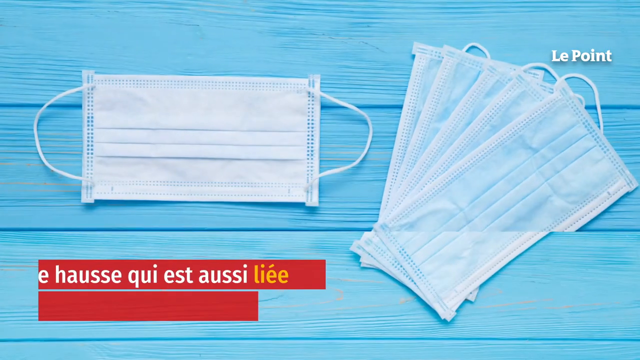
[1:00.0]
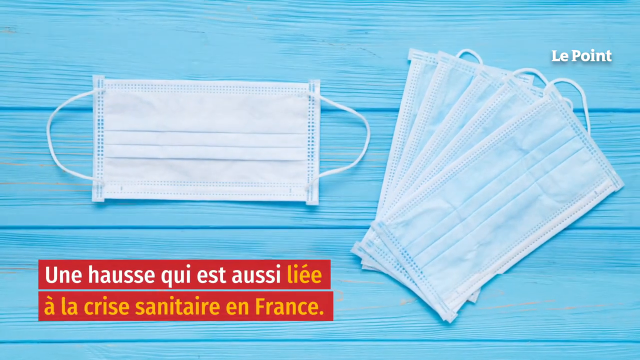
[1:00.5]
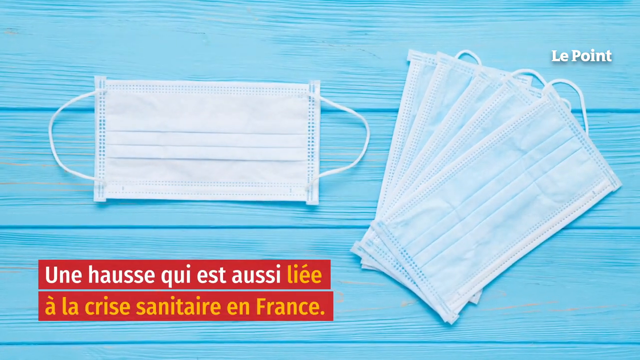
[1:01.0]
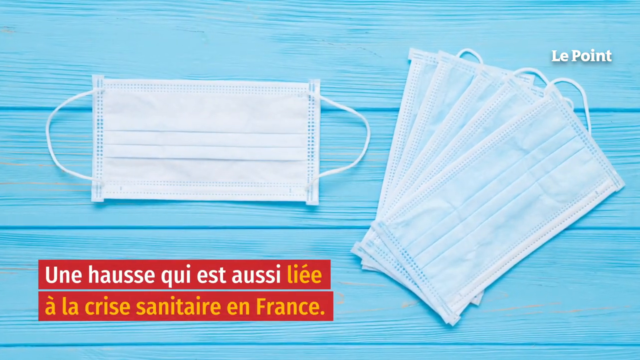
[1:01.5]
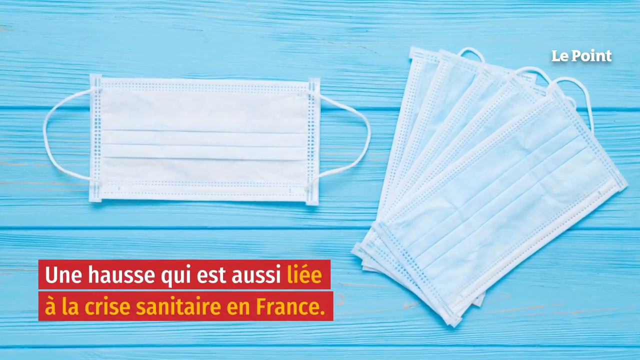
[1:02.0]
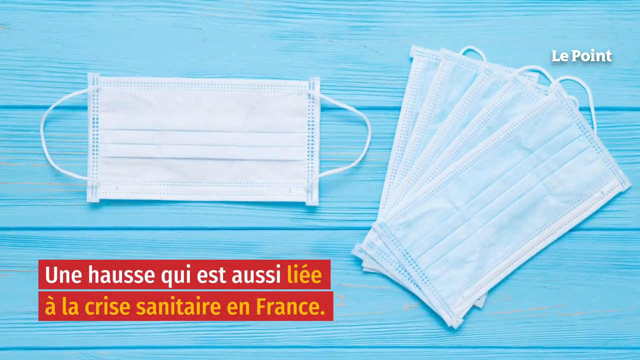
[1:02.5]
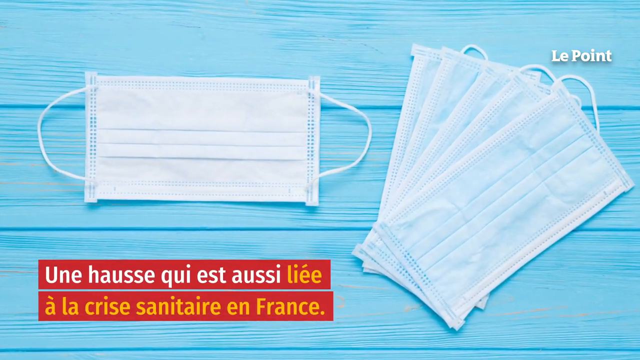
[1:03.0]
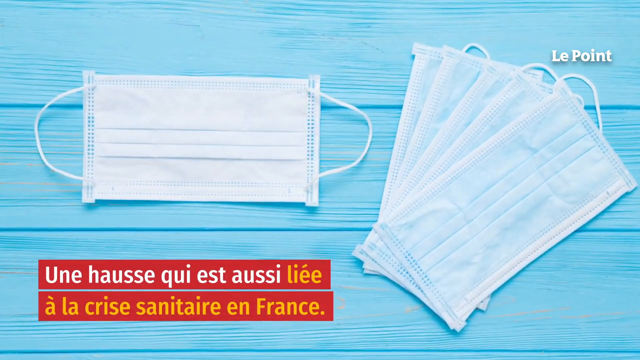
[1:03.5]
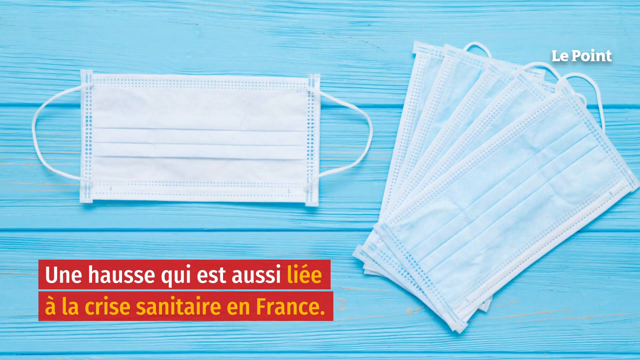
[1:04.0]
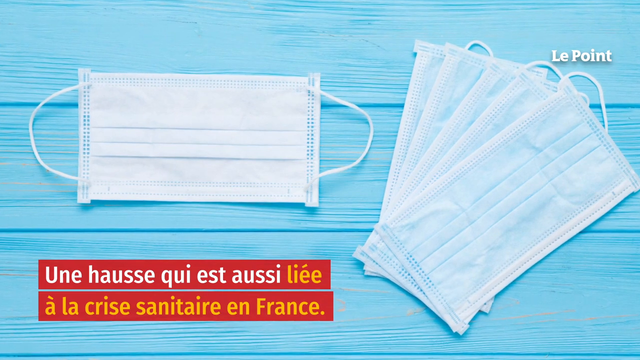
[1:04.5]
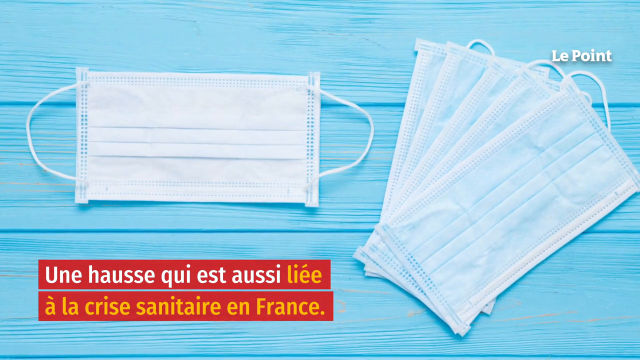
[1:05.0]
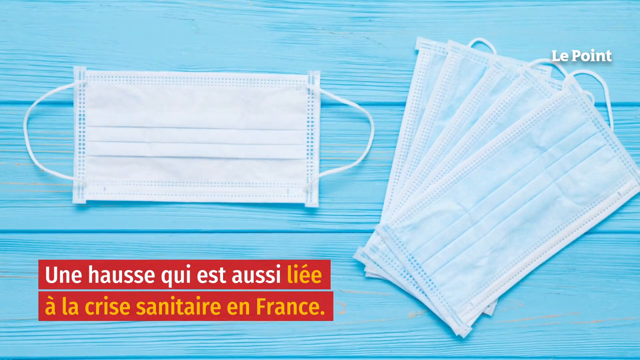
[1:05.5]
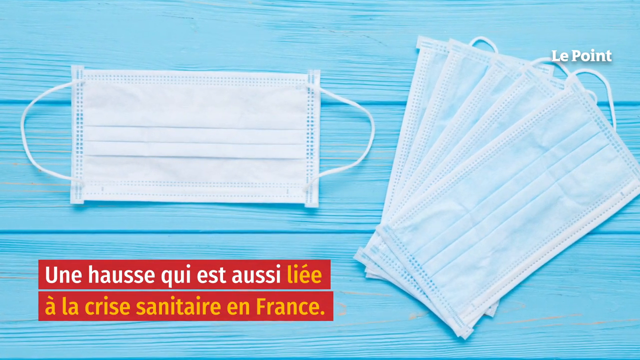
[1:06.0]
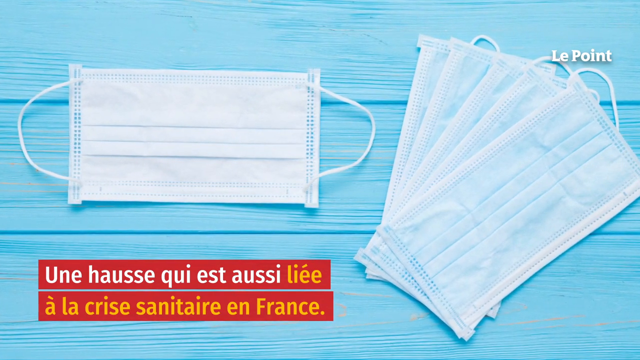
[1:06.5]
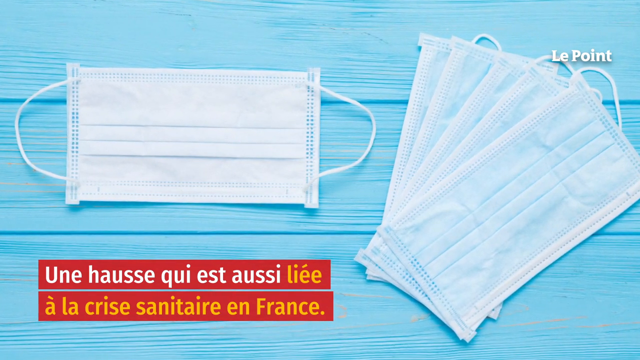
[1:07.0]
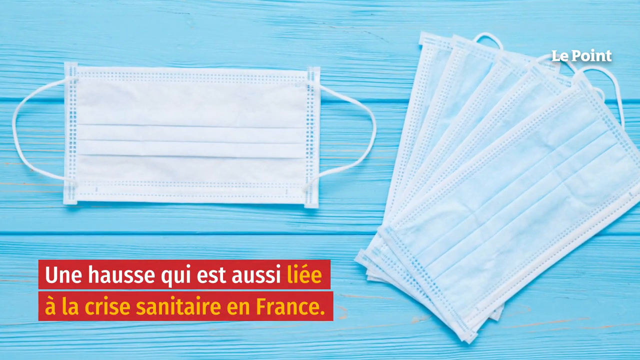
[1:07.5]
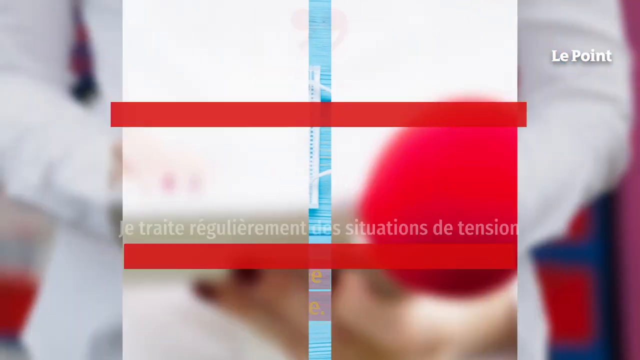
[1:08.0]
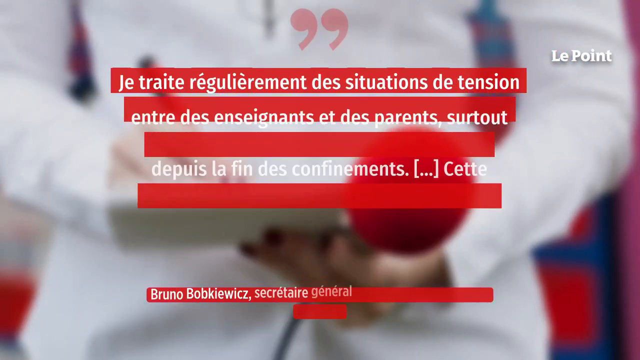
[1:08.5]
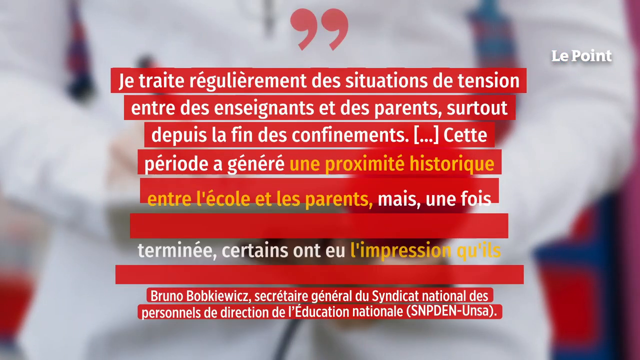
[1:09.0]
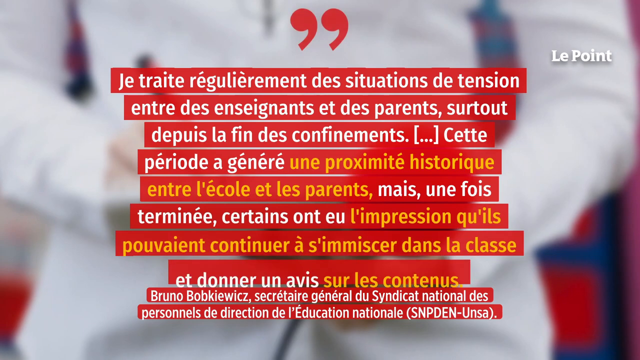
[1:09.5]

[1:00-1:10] Something that looks like maybe a wooden picnic table, or three pieces of wood, is painted a very light blue, with the grain and indentations in the wood visible. Cheap paper masks are carefully laid out on it: one is very centered, and four more look like they were carefully placed on top of each other. At the bottom the red banner appears again, with a sentence in white and then a sentence in orange; France is mentioned, and the text appears to be in French. Another image then appears, looking to be maybe a doctor's coat or simply a white coat, very blurry, showing only the person's chest and arms and not their legs. A long quote seems to be put up on screen, taking ten banners; it starts at the top of the screen and toward the bottom looks condensed to a smaller size. The font is still orange and white, mostly white except for the middle part in orange.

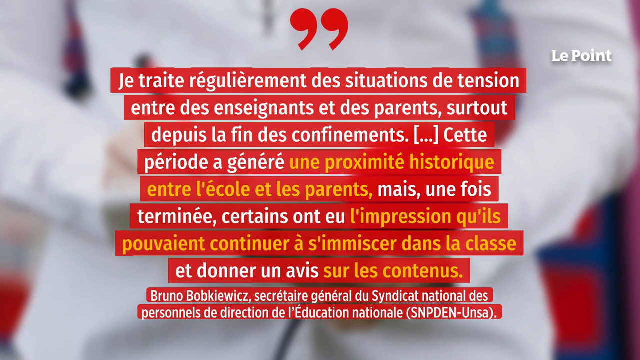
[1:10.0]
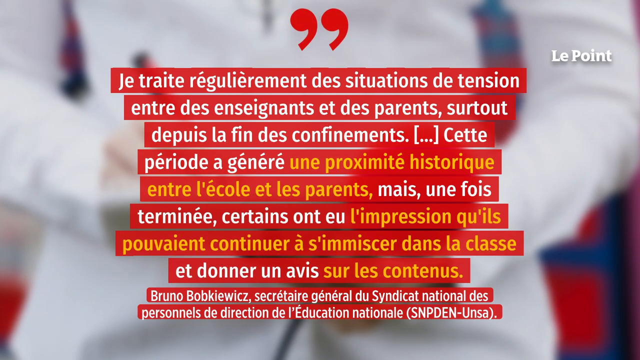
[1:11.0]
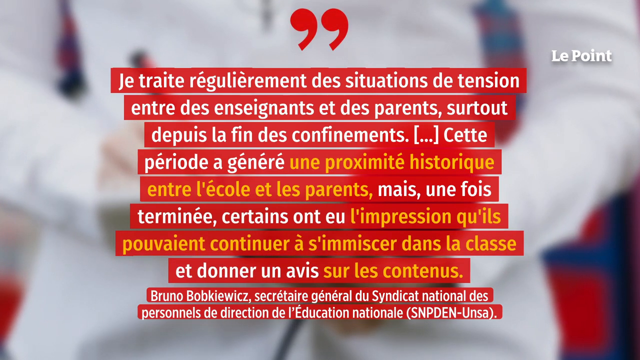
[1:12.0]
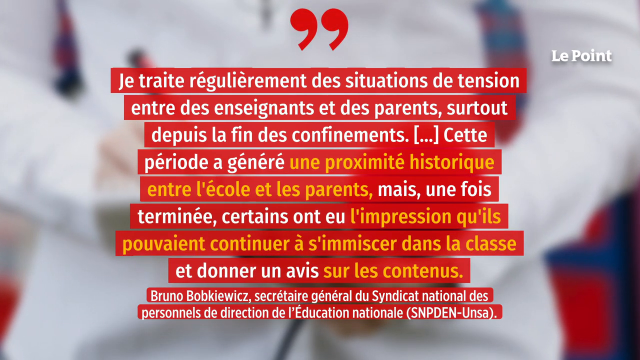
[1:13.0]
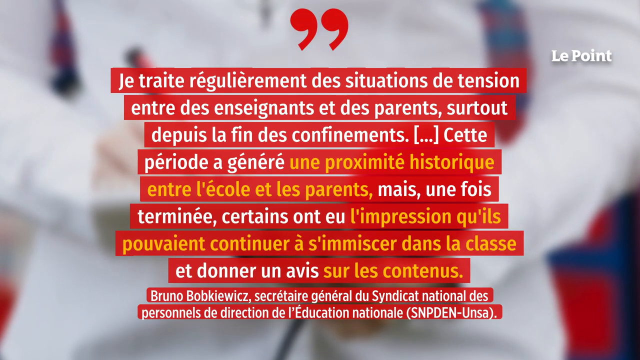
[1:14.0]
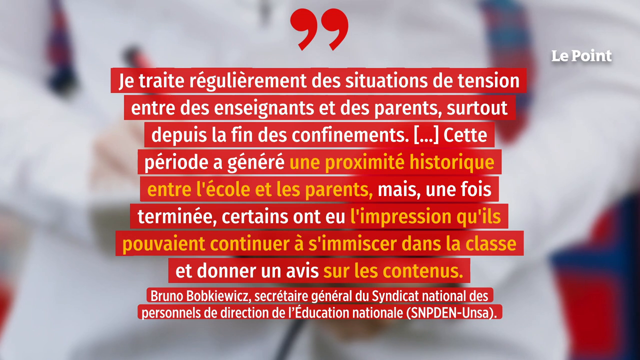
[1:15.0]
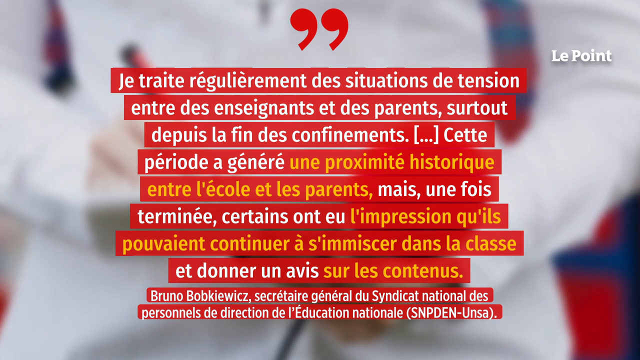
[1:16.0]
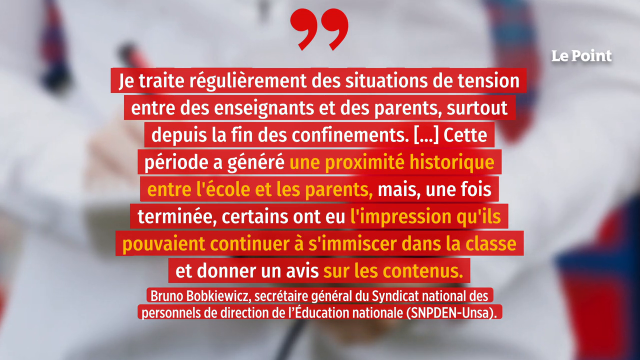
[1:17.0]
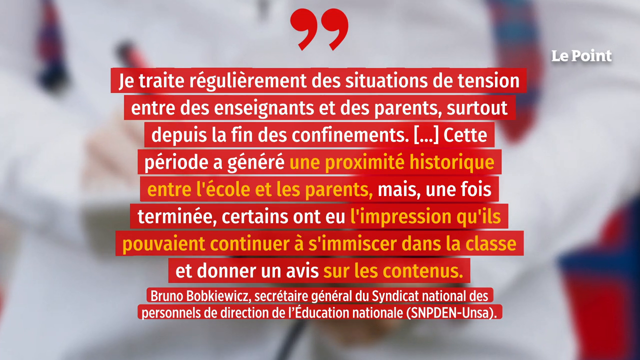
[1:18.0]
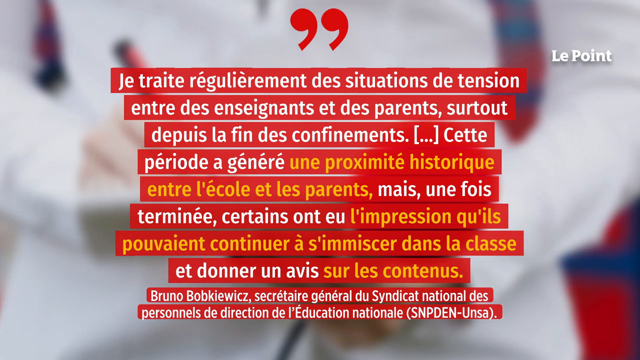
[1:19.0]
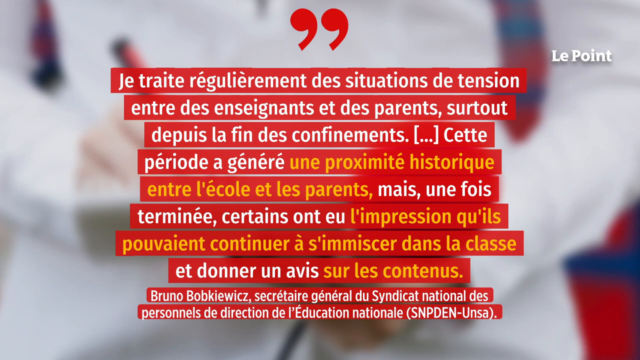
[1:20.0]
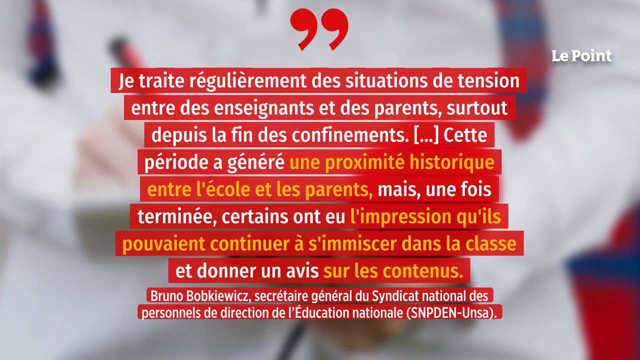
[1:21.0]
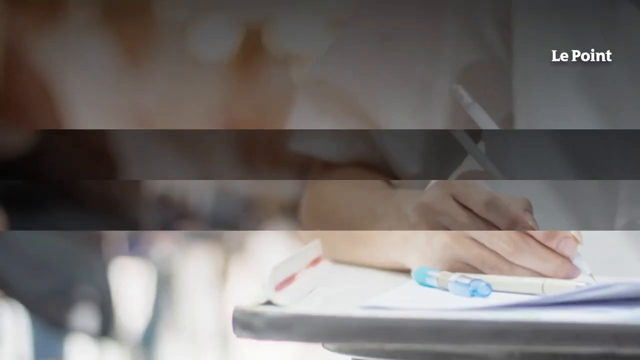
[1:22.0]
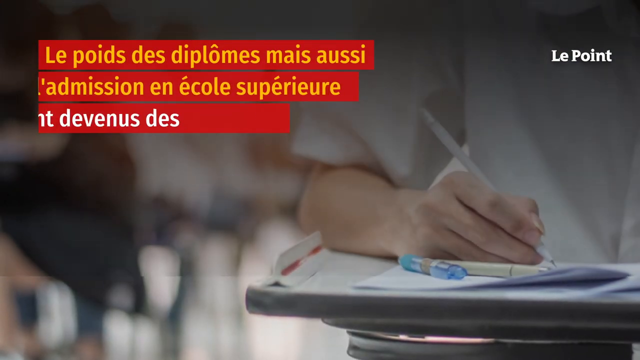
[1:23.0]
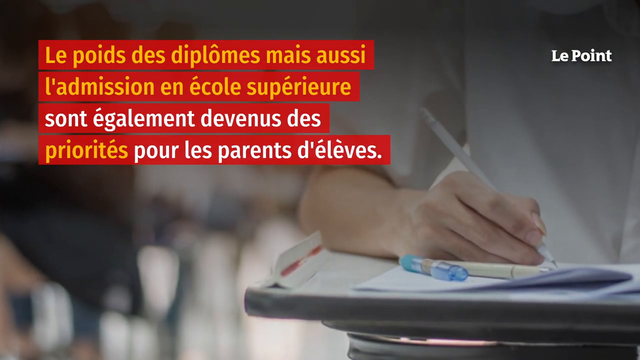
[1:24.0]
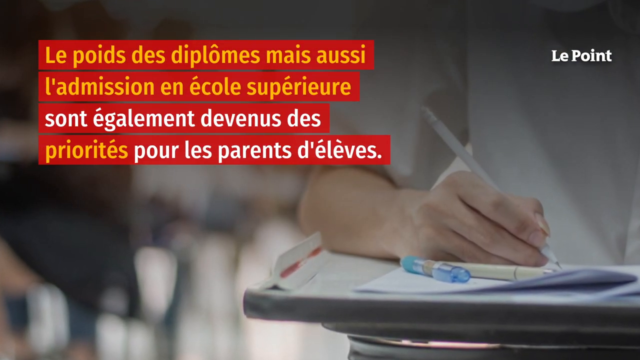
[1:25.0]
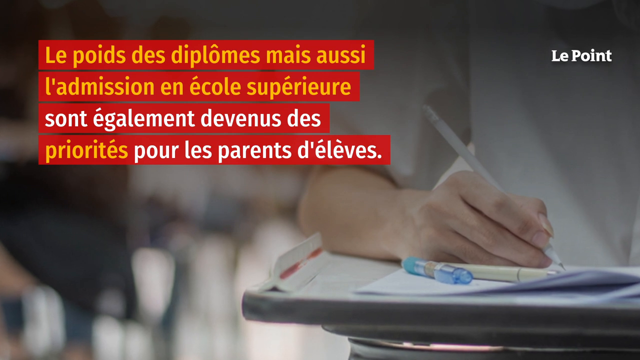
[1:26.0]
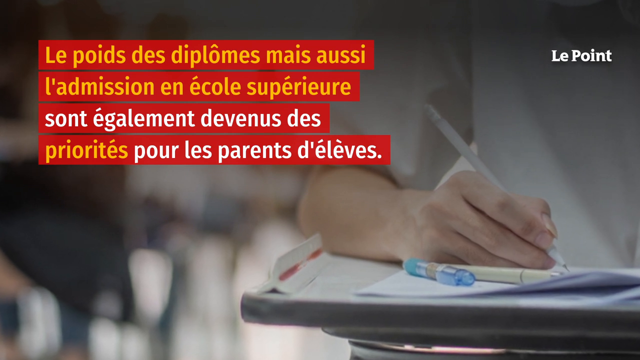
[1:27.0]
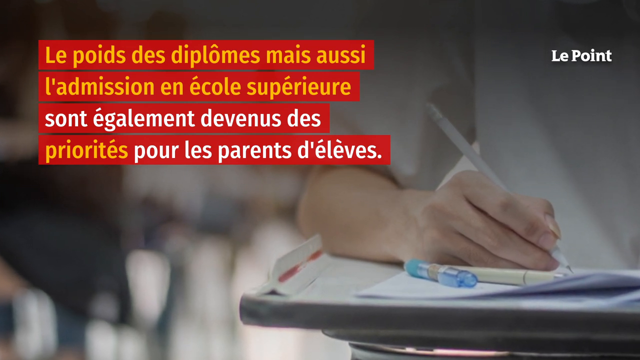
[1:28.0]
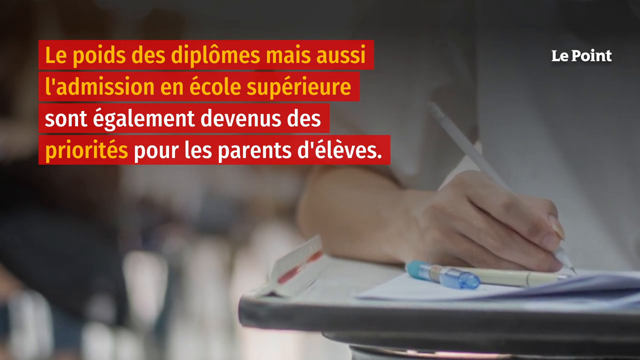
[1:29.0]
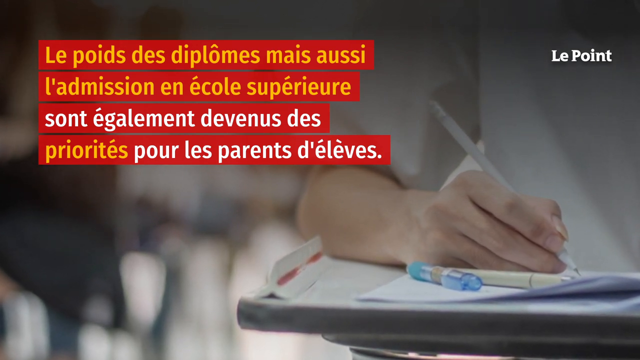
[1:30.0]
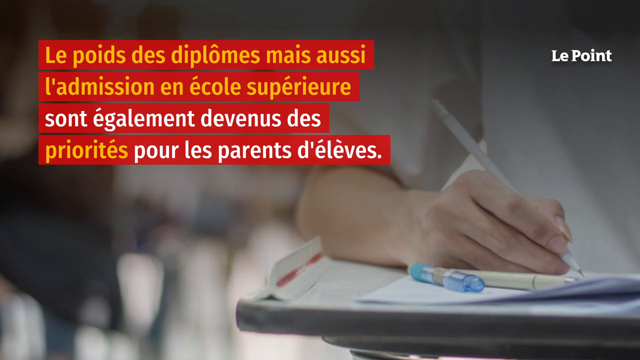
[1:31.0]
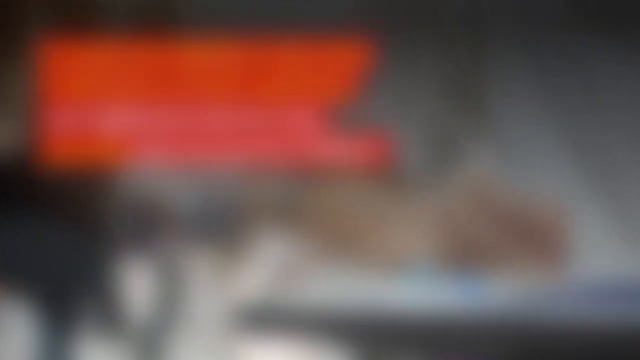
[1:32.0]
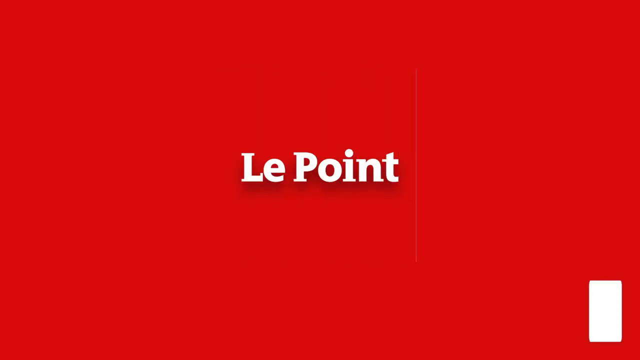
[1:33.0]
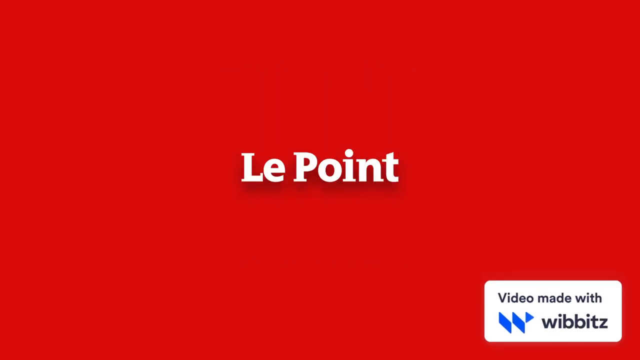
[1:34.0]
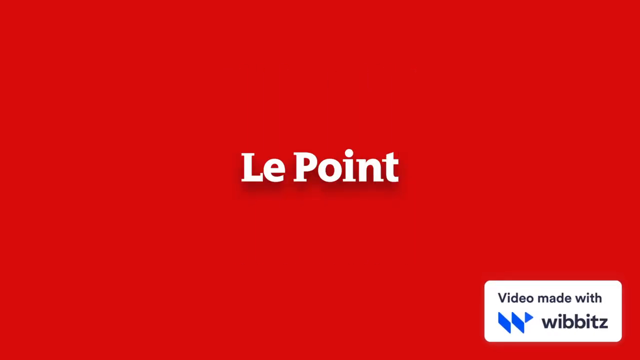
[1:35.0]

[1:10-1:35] The image of the person in a white jacket with the long quote remains, then switches to another child sitting at a desk, wearing a baggier white shirt and writing on a piece of paper with a white pencil. Right next to and in front of their hand there look to be two more writing objects. There seems to be some type of three-dimensional ruler on the desk, and there are maybe other desks in the background, blurred out. This person also looks to be Caucasian. The banner appears again with French writing in orange and white: the first two banners are orange, the third is white, and the fourth has one sentence in orange with the rest in white. The camera again slowly zooms in, and then the video switches to a final screen that is all red, with "LA POINTE" written in white capitals in the very center. A white square at the bottom says "video made with wibbitz", with some type of graphic image that is blue in the corner.